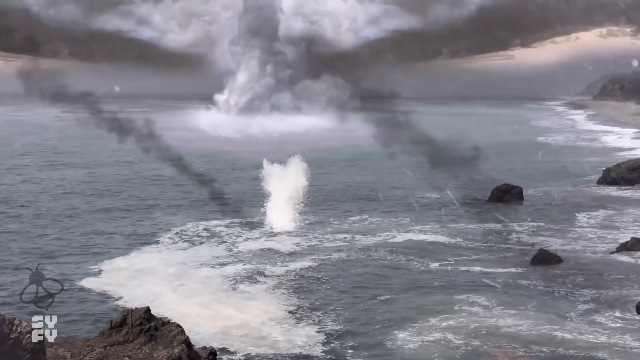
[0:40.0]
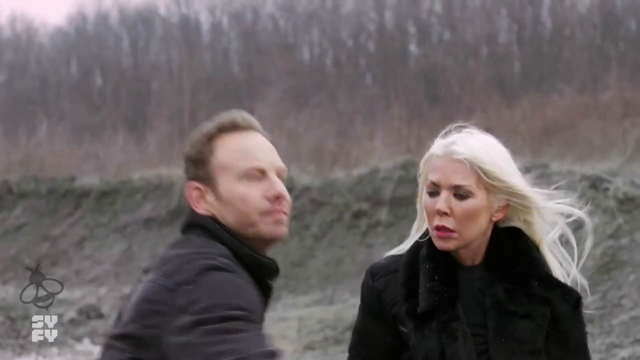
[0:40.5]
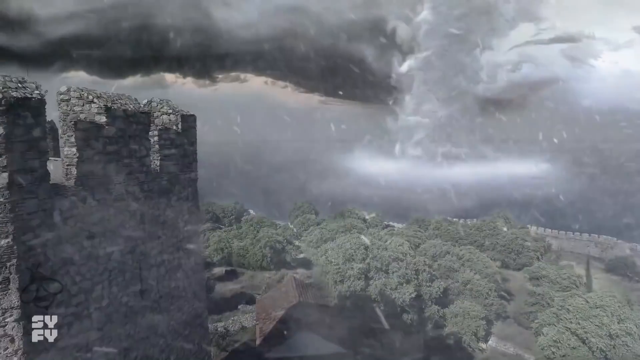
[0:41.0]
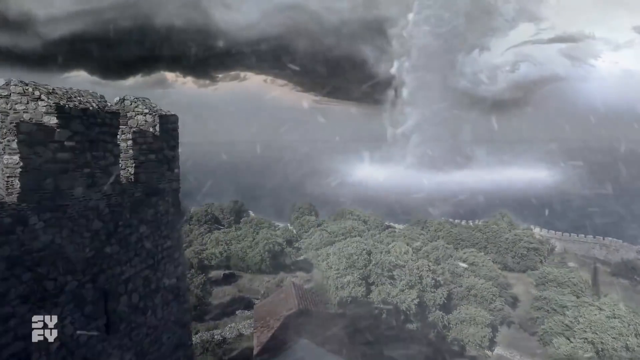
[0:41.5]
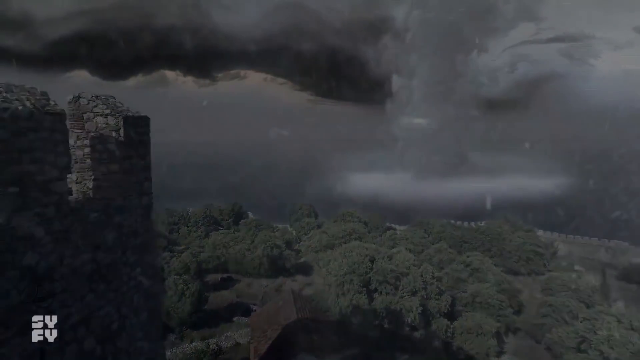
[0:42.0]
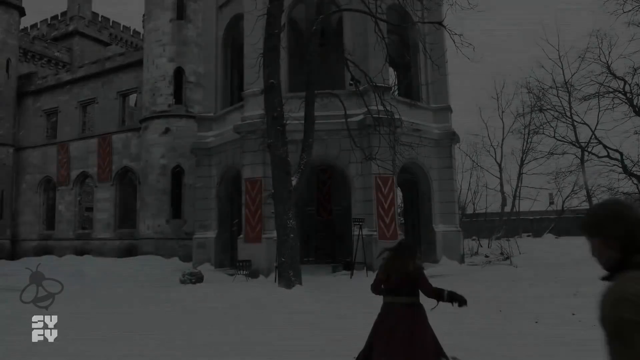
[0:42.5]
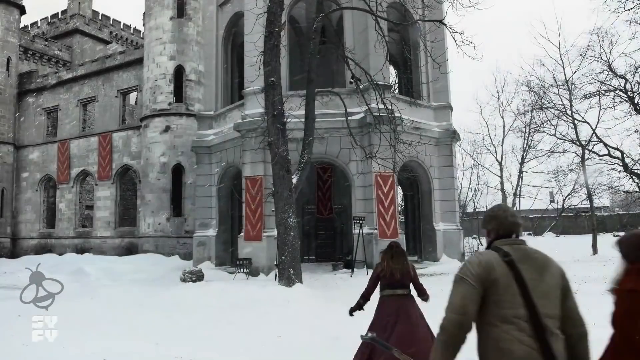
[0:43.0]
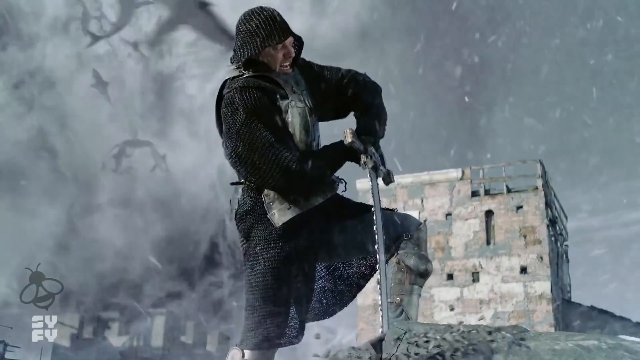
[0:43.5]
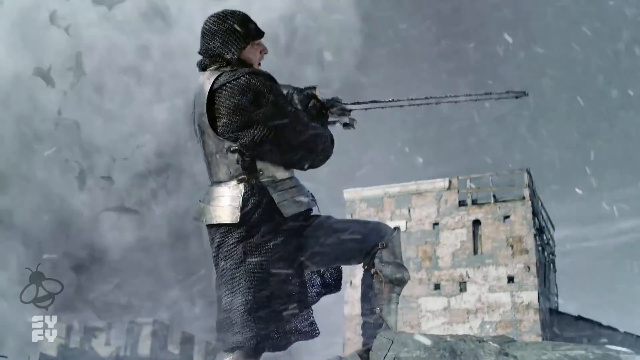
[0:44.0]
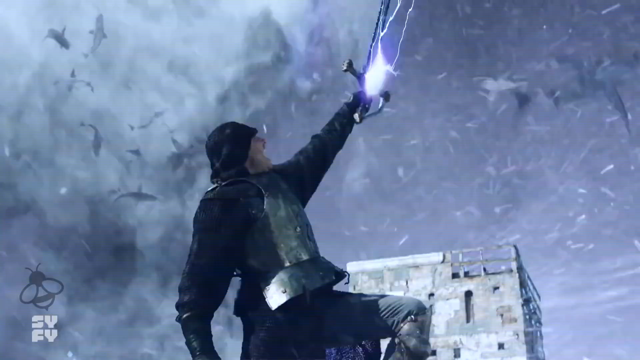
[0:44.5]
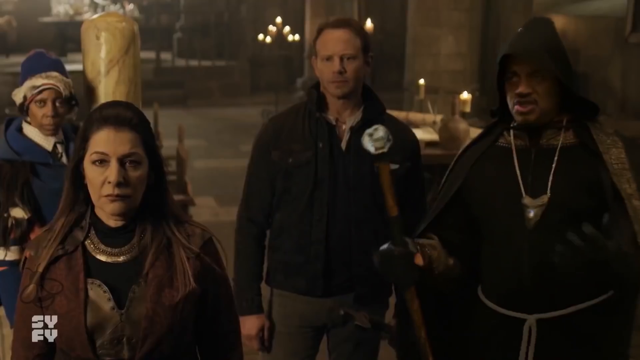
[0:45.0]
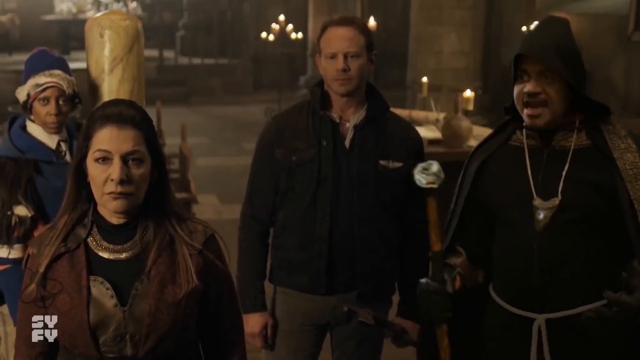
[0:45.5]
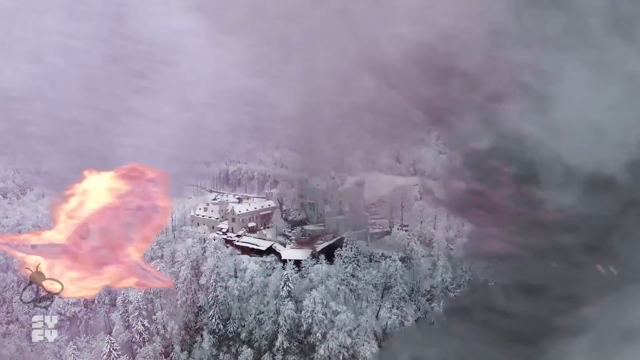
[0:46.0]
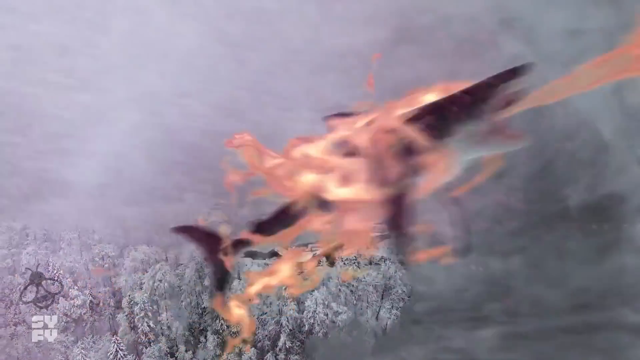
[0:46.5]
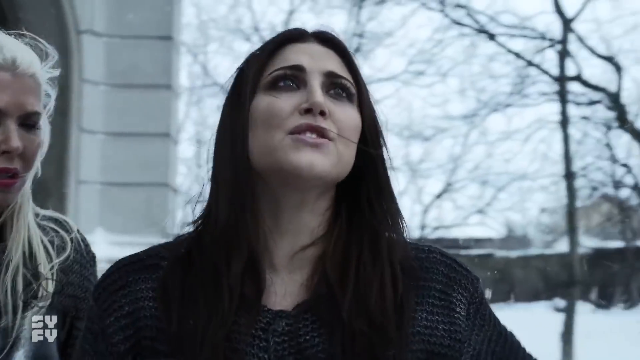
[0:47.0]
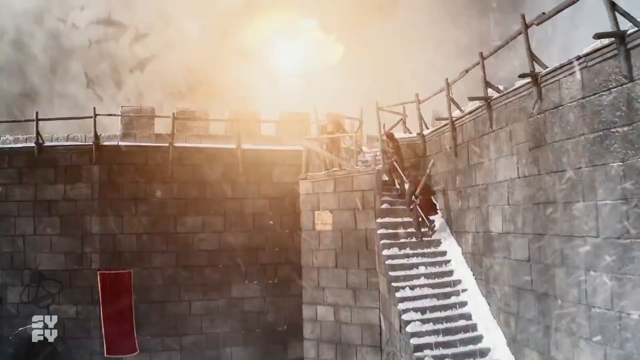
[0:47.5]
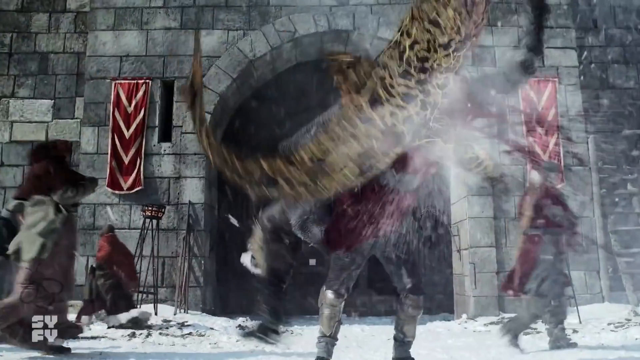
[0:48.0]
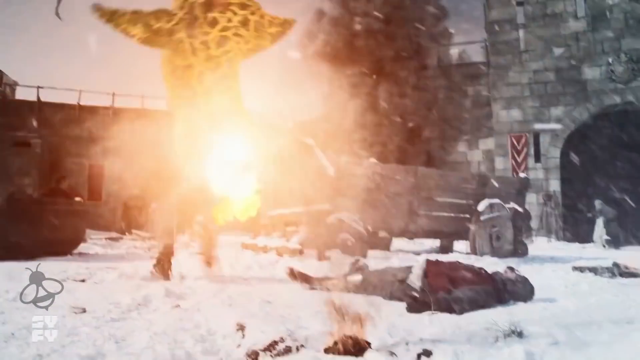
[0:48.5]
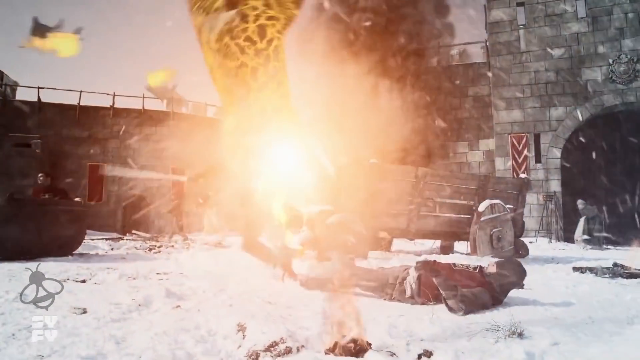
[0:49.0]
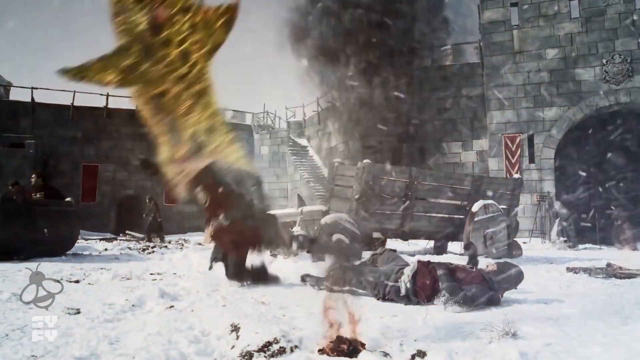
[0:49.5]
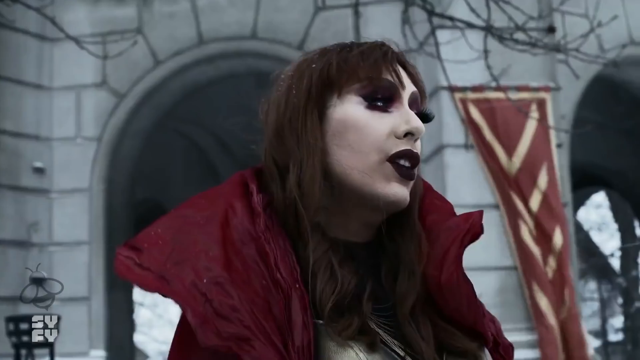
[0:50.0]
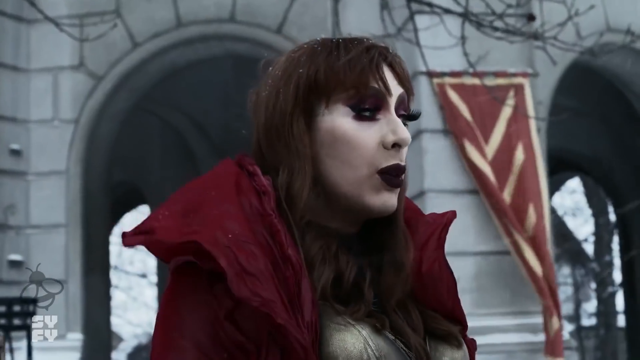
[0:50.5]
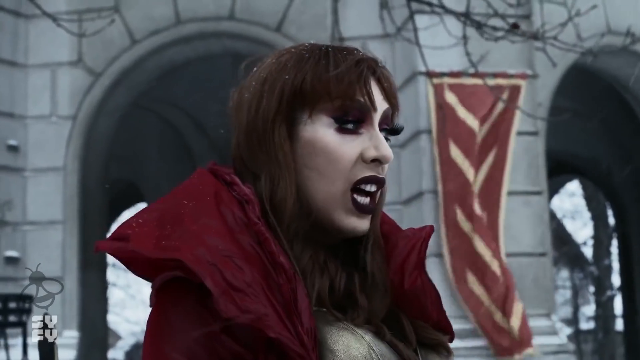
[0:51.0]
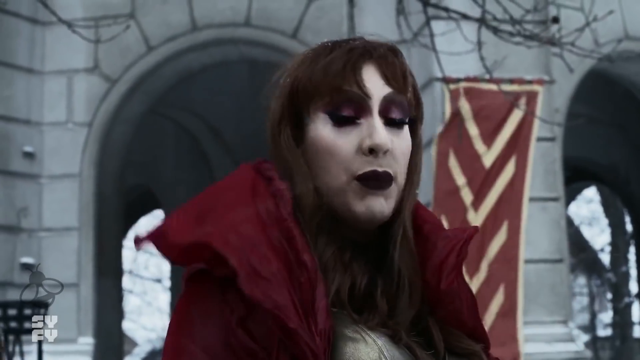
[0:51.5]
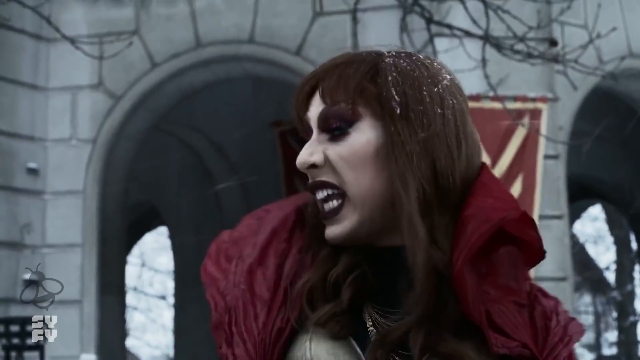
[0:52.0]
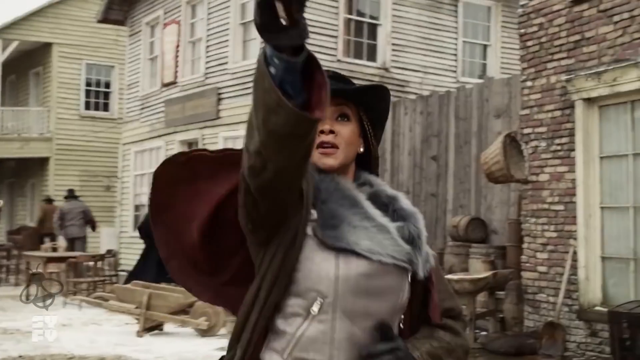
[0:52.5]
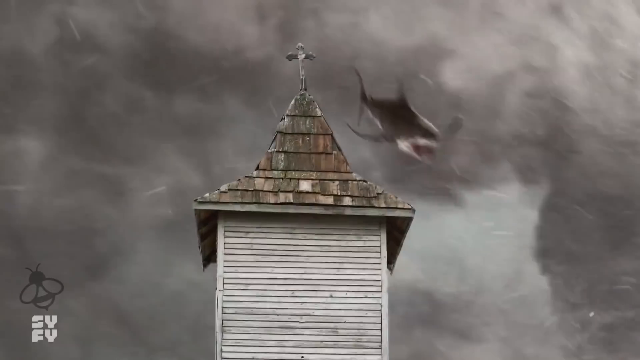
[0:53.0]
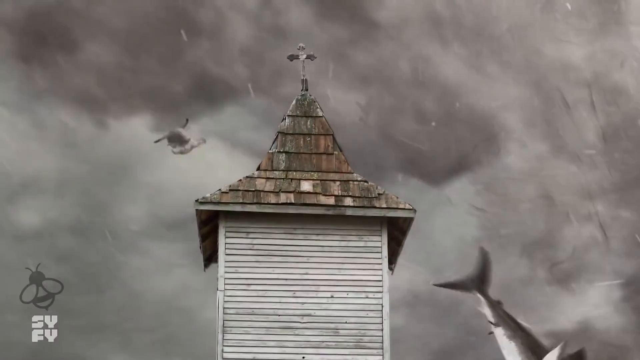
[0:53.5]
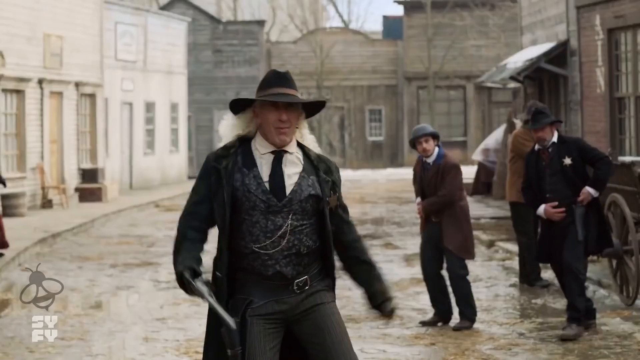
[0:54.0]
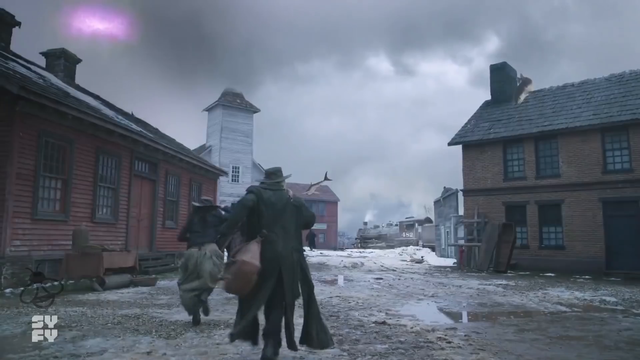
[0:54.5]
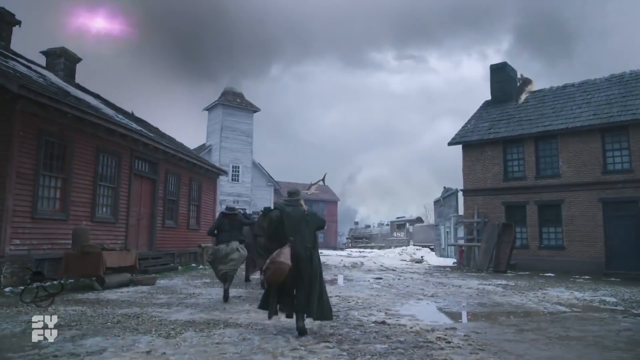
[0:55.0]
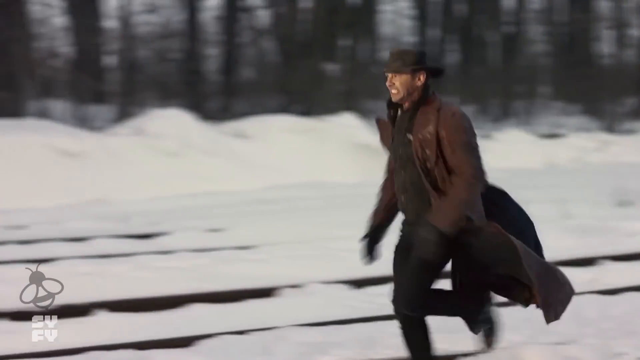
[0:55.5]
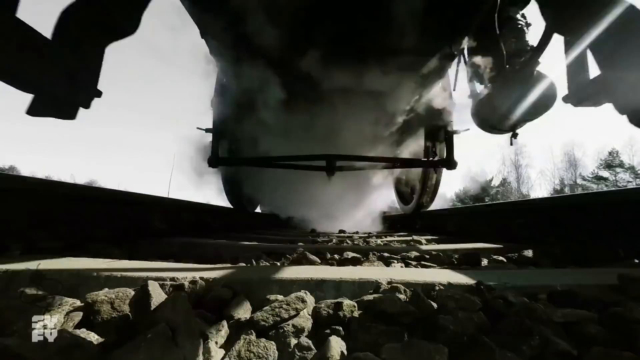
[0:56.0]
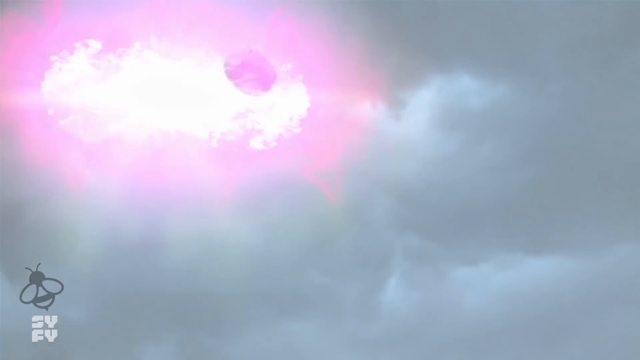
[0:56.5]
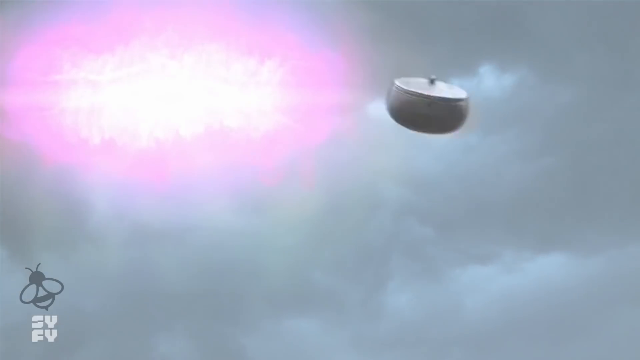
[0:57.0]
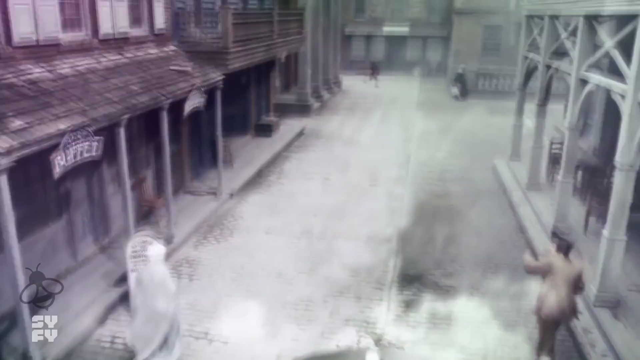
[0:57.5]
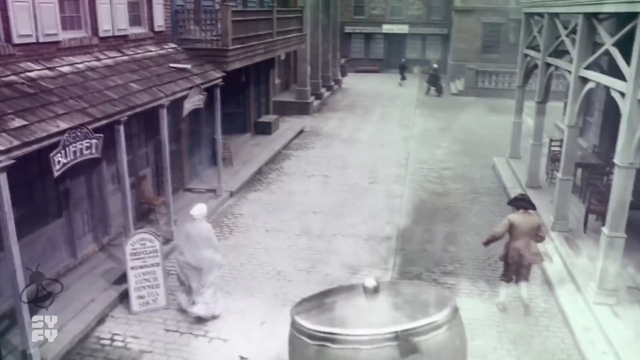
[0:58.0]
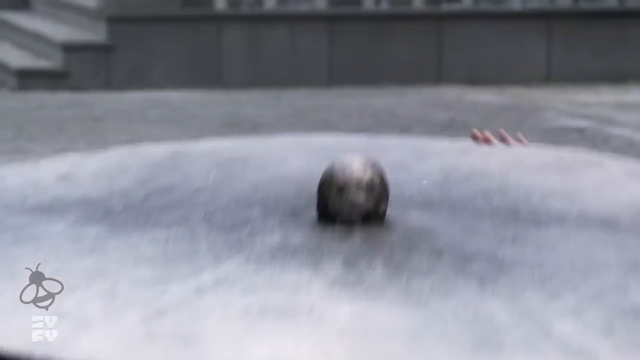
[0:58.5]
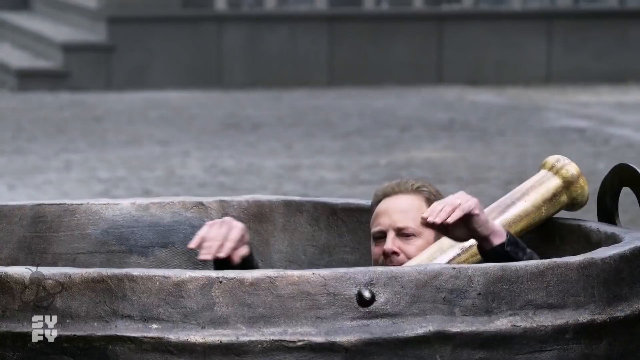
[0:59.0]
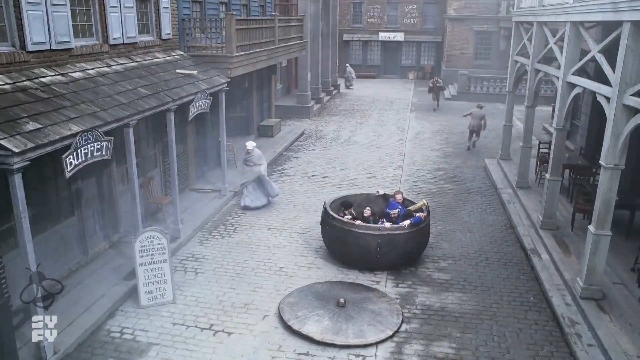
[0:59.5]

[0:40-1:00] Several burning rocks from the volcano fall into the ocean. A tornado emerges from the ocean and comes to a stronghold, an olden-day castle, where a man pulls a sword out like in the story of King Arthur. The sharknado passes above him with flying sharks, and lightning comes out of his sword. Inside the castle, the man who pulled out the sword is seen. Some of the sharks are on fire as the tornado keeps going, including spotted tiger sharks on fire that knock people down and eat them. Cowboys shoot at the sharknado and at the sharks falling from the sky. A train appears, and the characters are shown to have been in a container, a metallic pot.